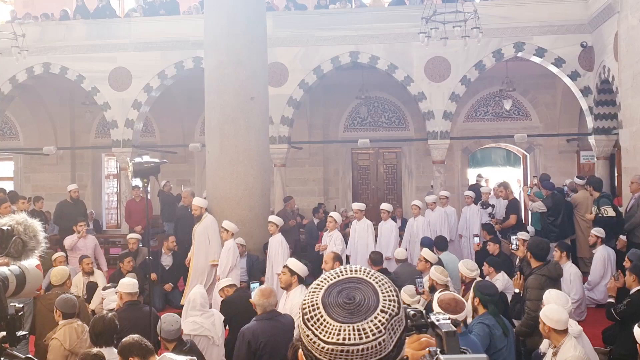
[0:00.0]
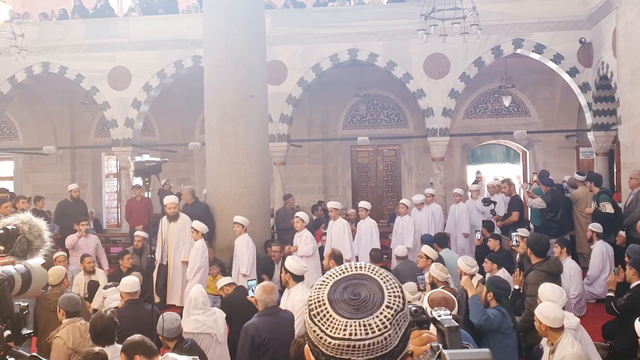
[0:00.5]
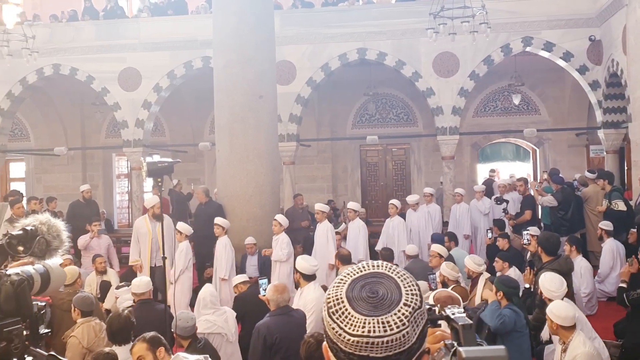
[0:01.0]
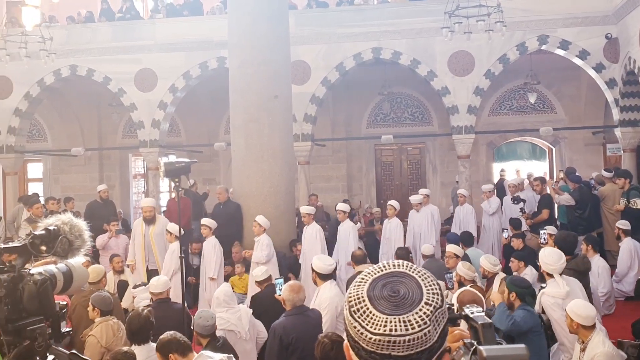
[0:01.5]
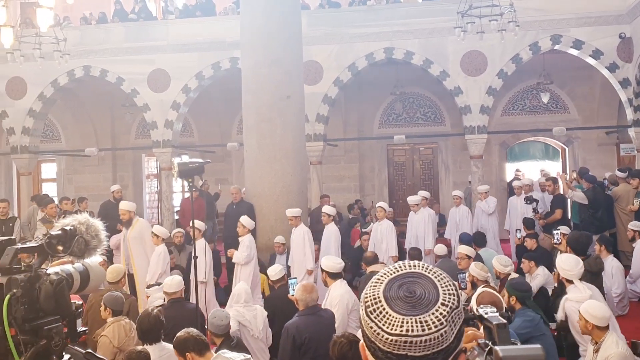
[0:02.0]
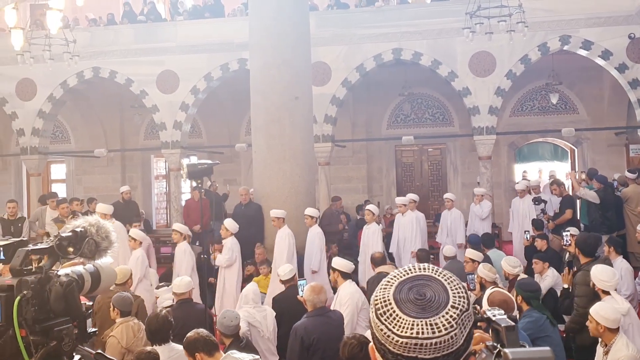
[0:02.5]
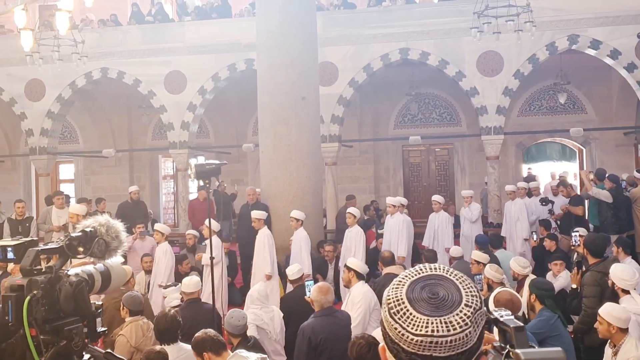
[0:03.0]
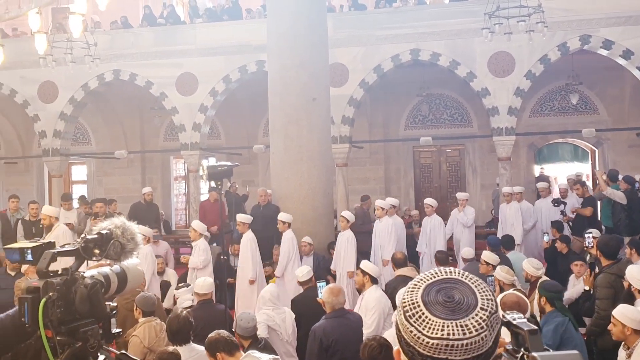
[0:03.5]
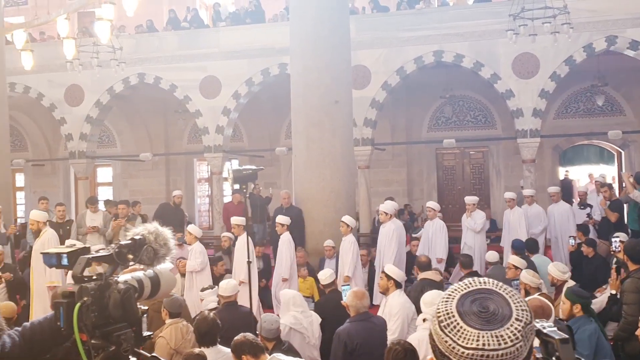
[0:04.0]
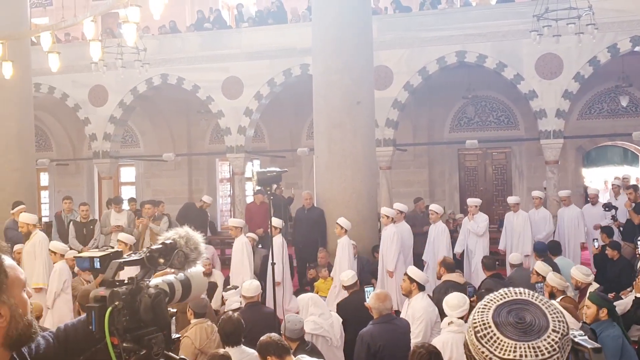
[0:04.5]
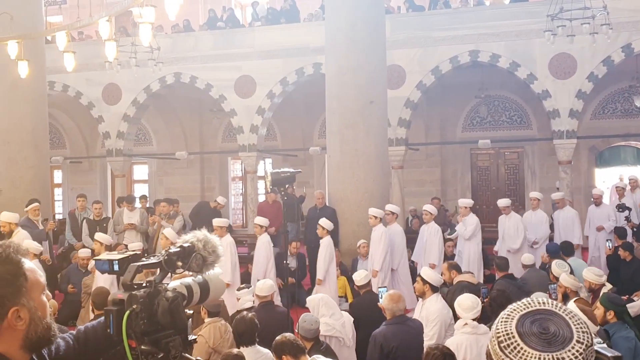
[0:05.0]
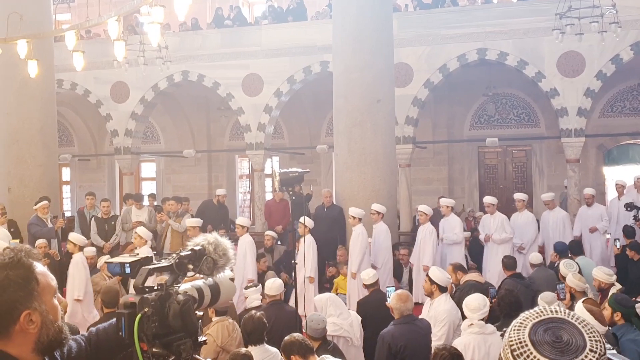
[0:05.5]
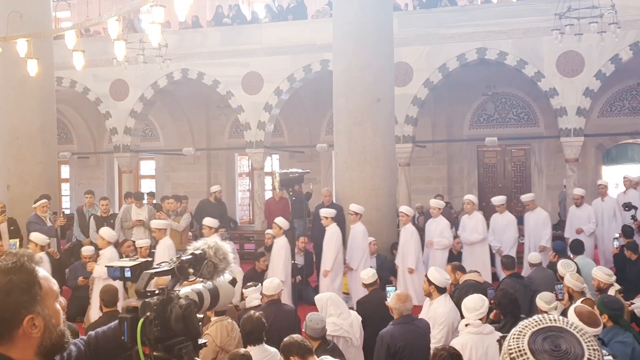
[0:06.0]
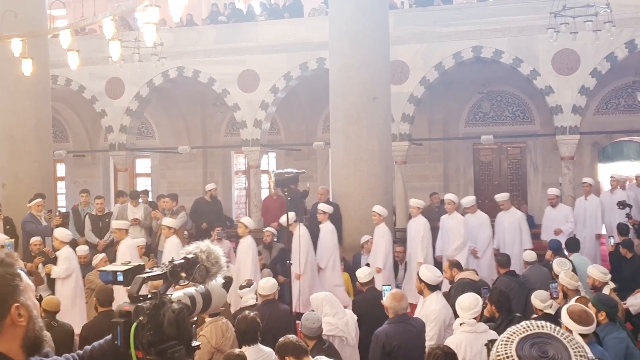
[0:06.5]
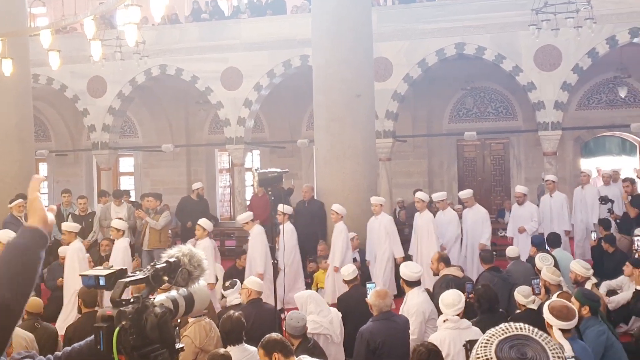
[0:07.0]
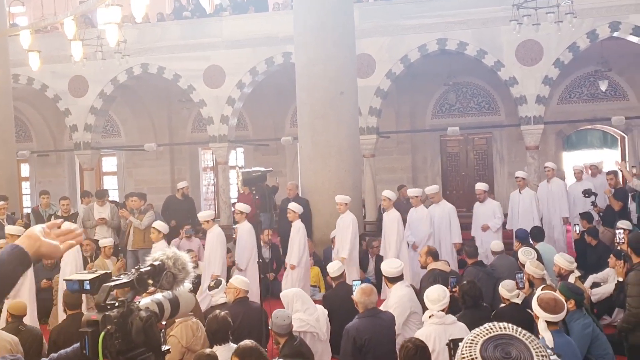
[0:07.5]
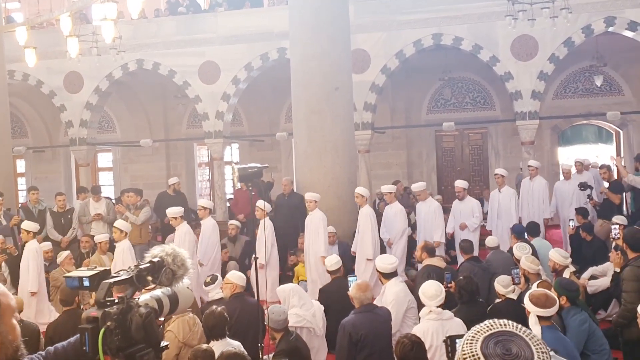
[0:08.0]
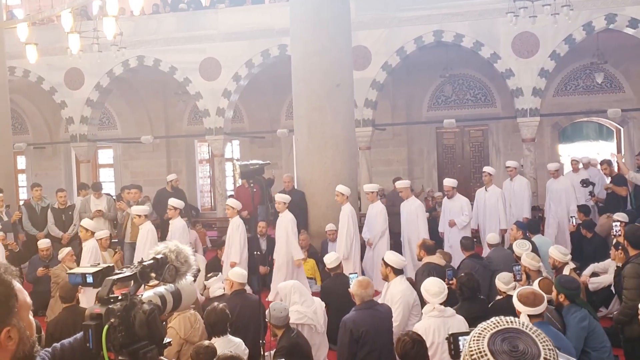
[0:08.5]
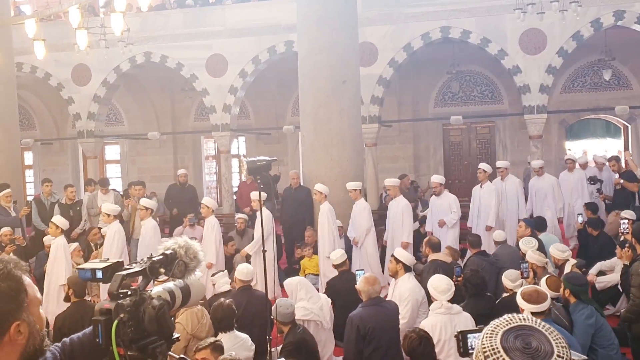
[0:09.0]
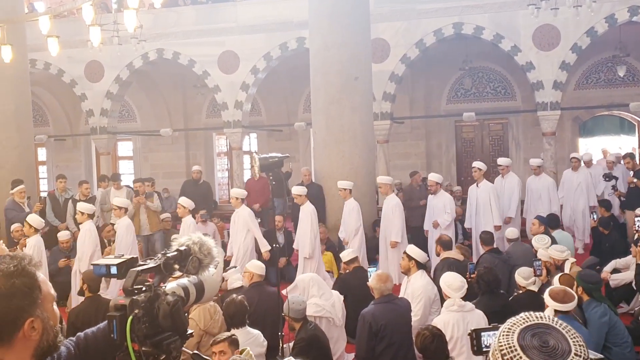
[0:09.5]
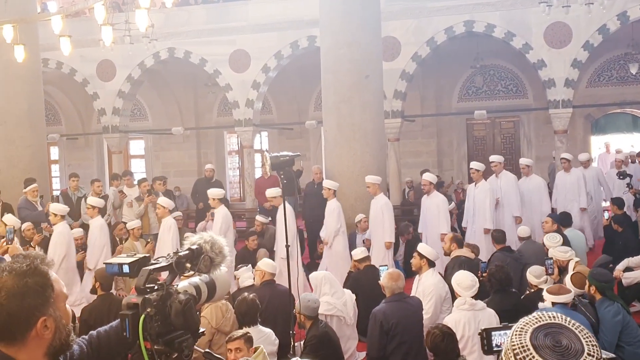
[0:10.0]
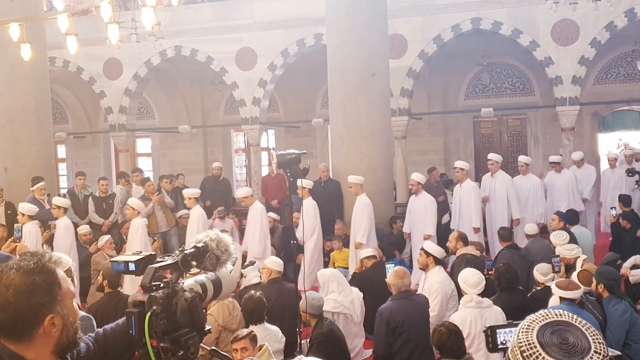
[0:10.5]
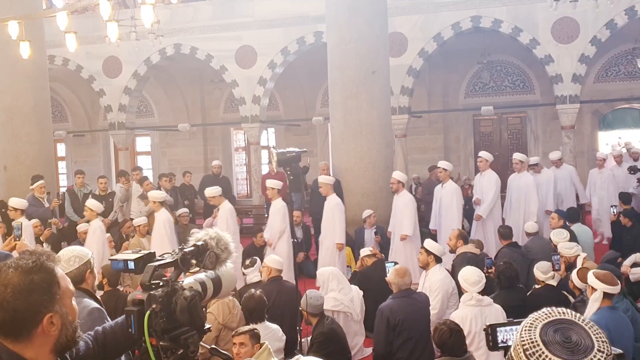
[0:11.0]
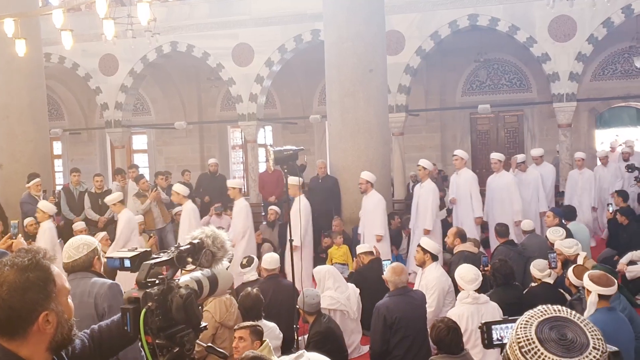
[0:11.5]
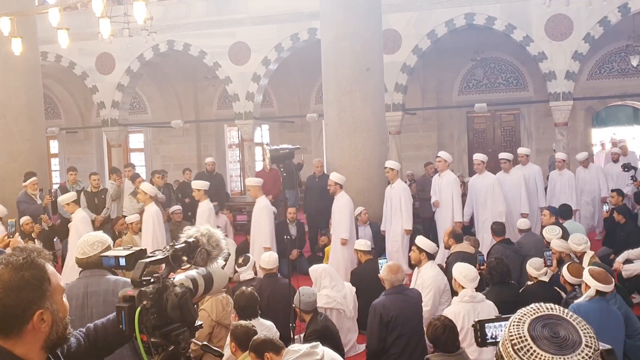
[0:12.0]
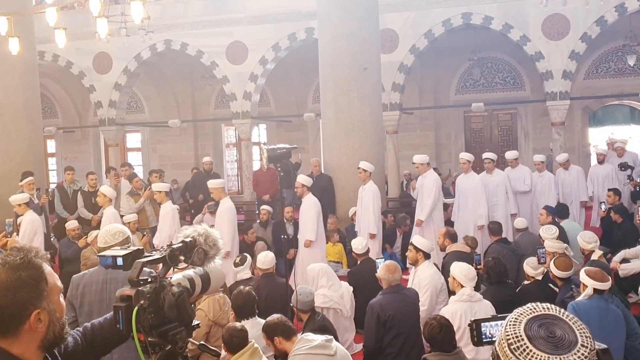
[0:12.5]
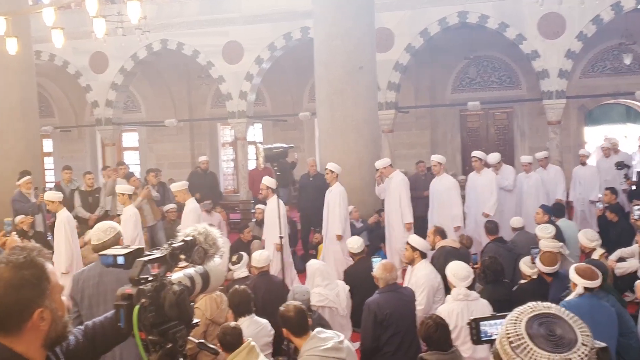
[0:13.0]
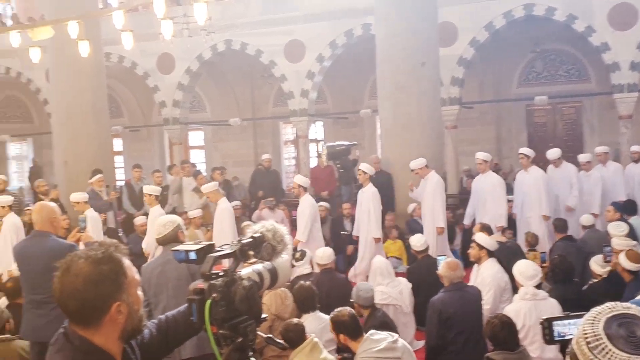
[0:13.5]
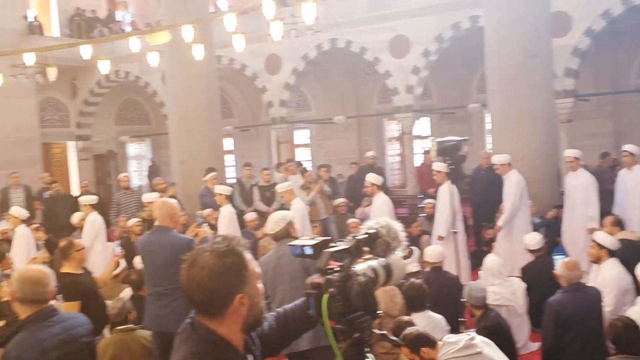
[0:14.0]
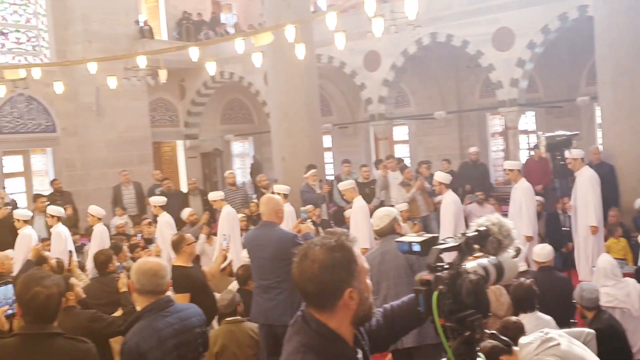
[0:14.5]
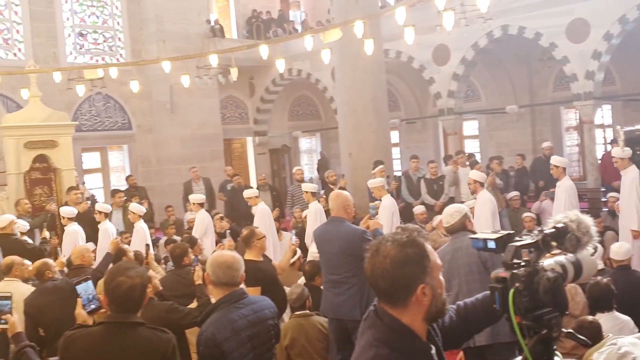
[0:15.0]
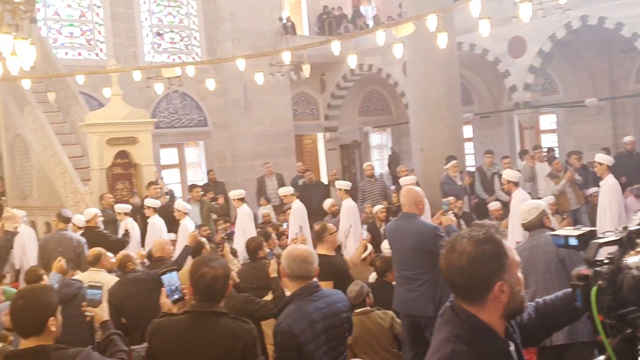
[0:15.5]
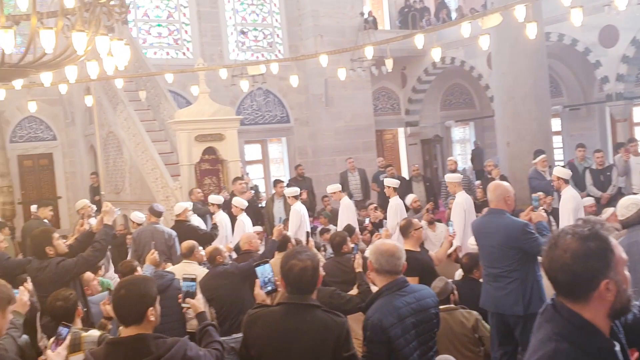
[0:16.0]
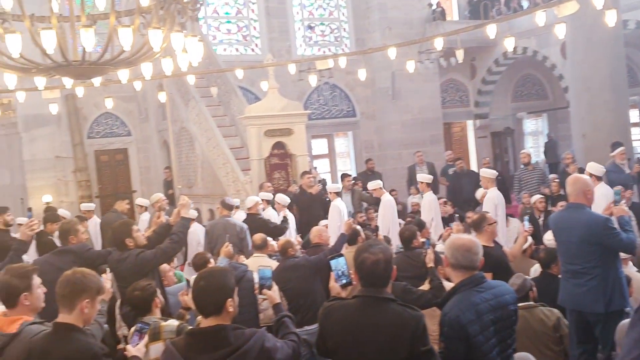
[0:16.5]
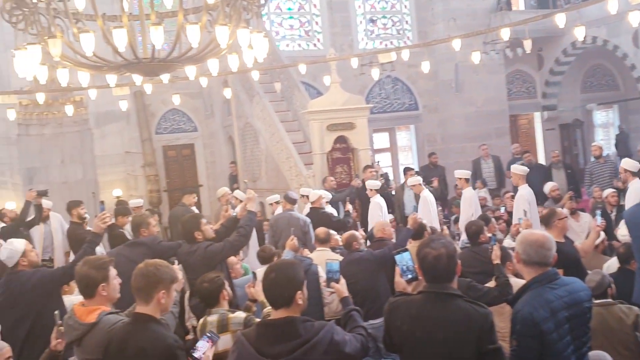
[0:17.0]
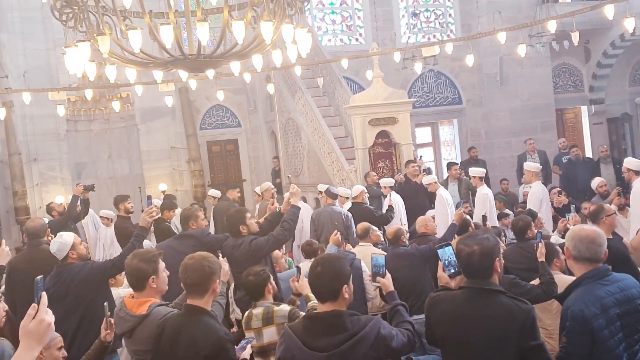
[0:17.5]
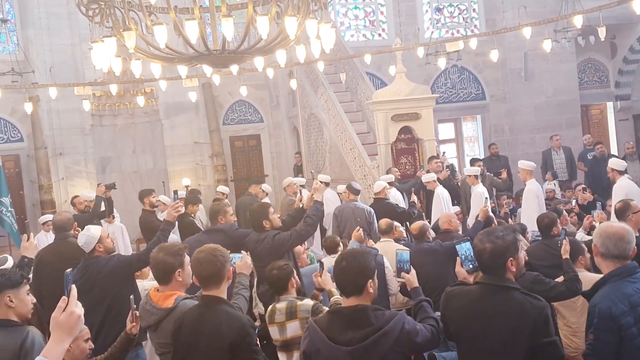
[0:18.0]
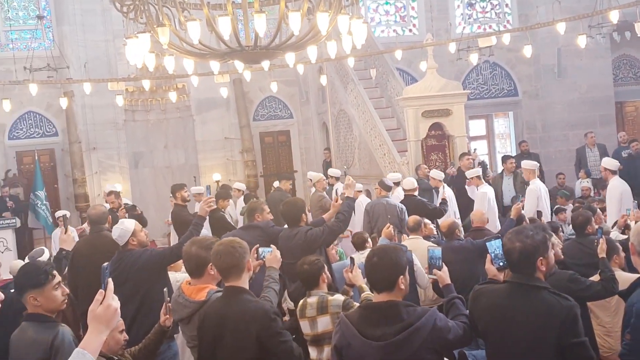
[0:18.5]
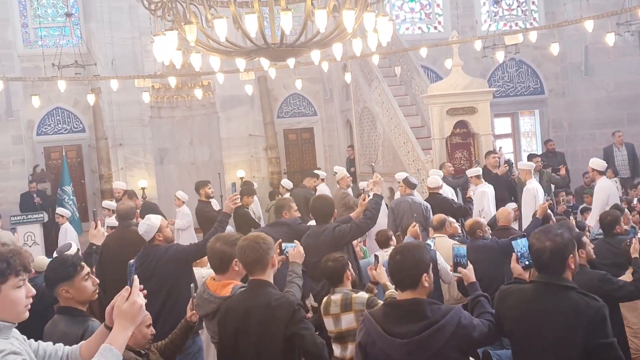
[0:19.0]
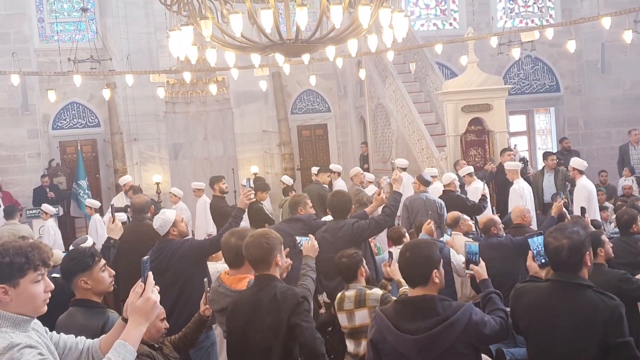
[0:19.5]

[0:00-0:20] A line of boys and men streams into an open area with arches in the background. The place looks like it could be religiously related, with chandeliers at the top of the ceiling. A large audience watches in the background as the line of boys is led into the area by a man at the front. The boys all wear white, kind of like white robes, and white flat rimmed hats that go around the top of their heads. The camera records as they walk in to the front area. Many of the spectators hold their cameras up to video and take pictures of the event. In the background, the building has many arches with intricate coloring and smaller arches that decorate it.